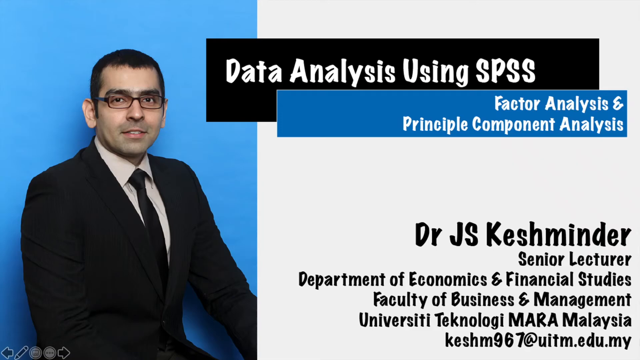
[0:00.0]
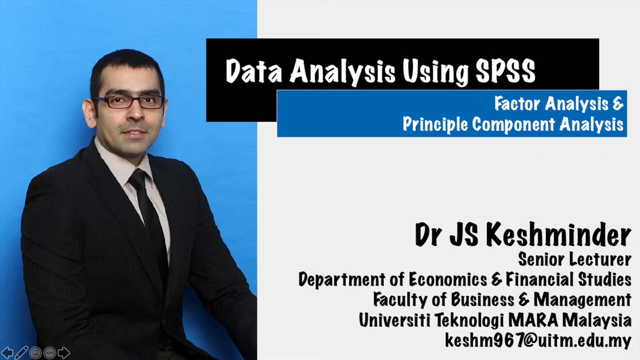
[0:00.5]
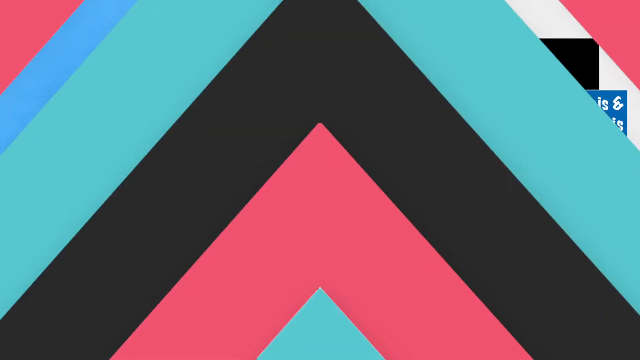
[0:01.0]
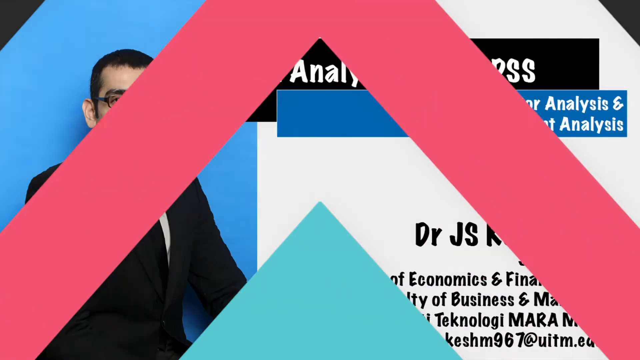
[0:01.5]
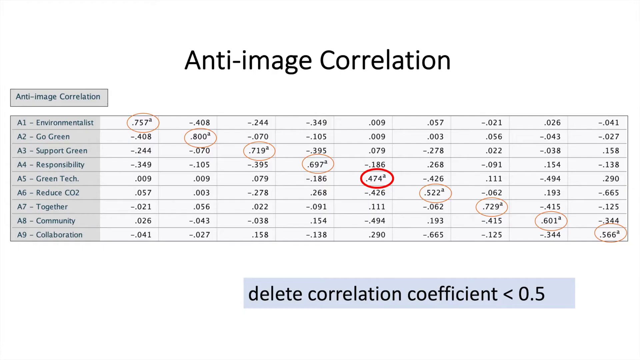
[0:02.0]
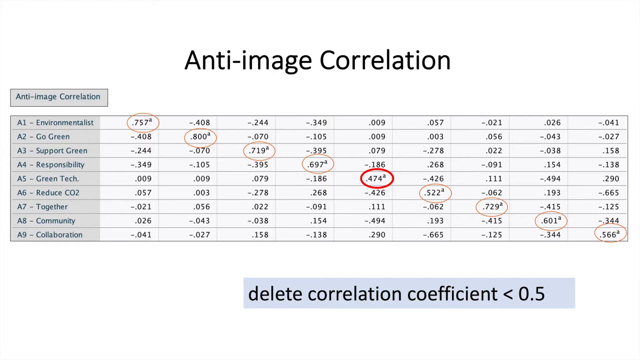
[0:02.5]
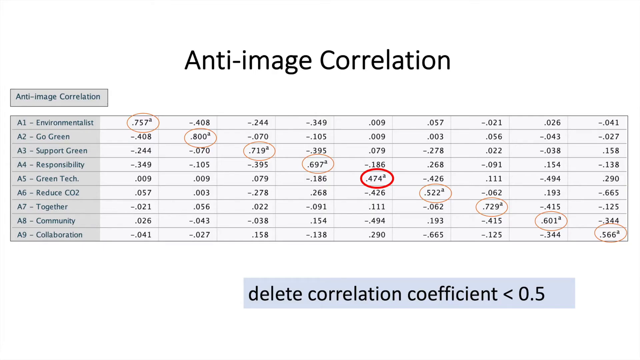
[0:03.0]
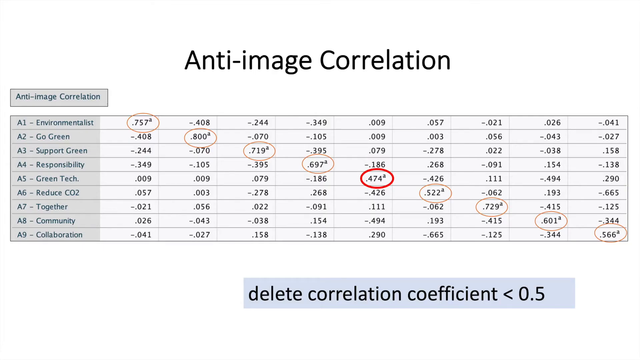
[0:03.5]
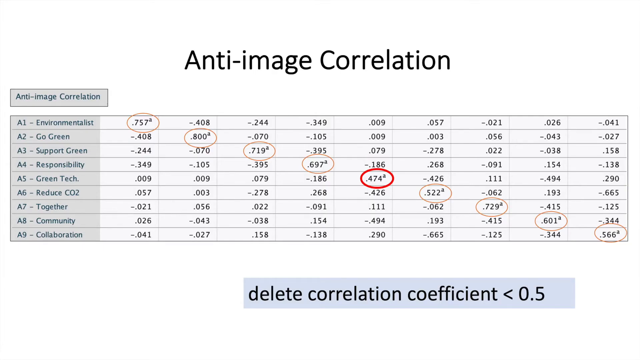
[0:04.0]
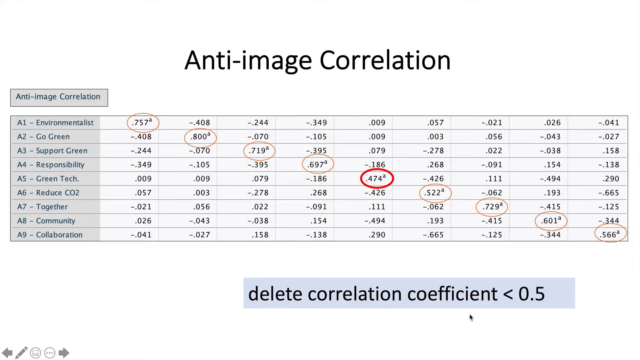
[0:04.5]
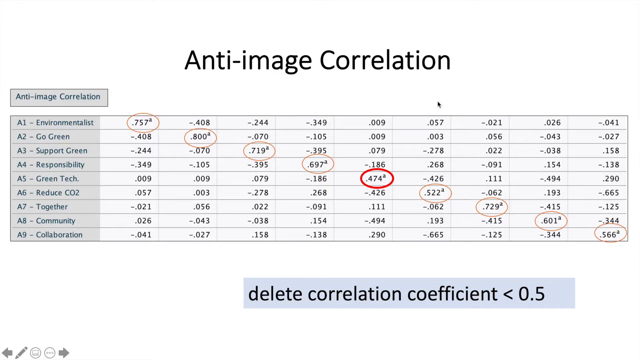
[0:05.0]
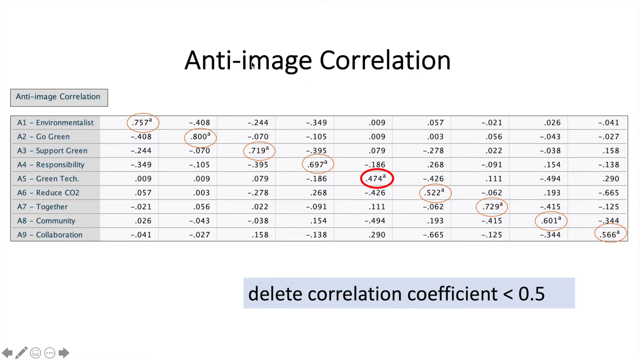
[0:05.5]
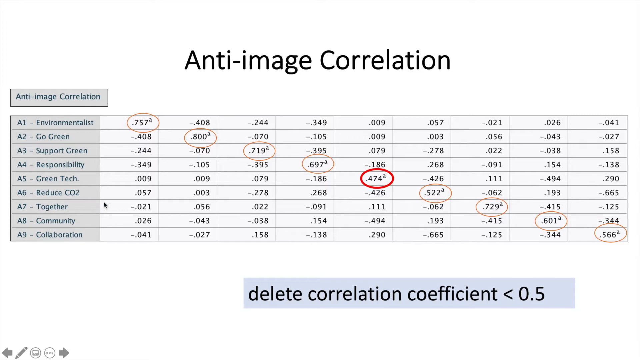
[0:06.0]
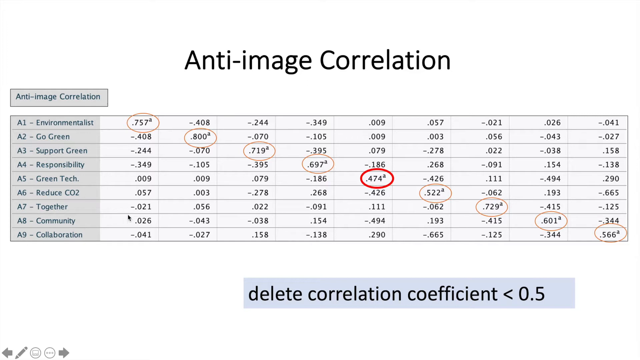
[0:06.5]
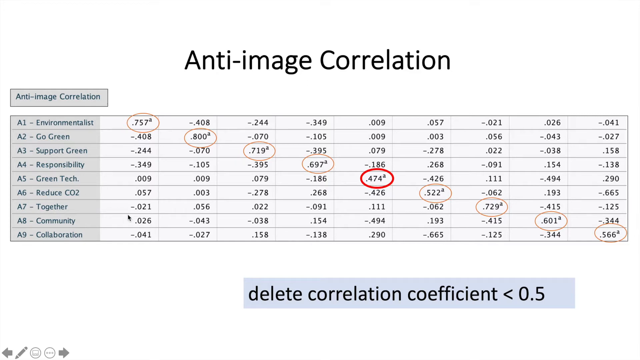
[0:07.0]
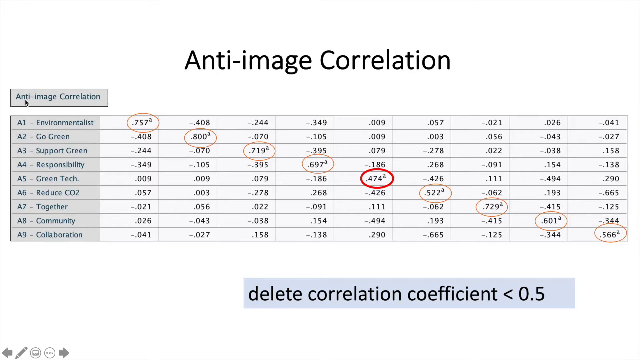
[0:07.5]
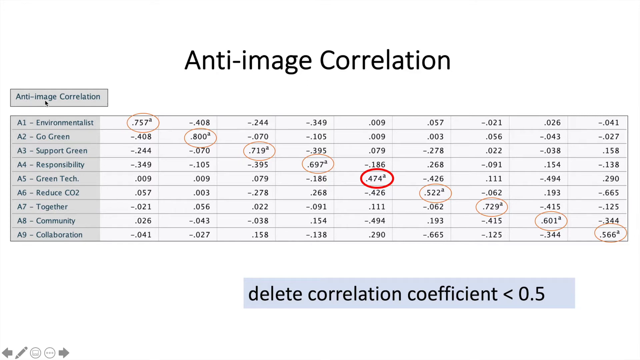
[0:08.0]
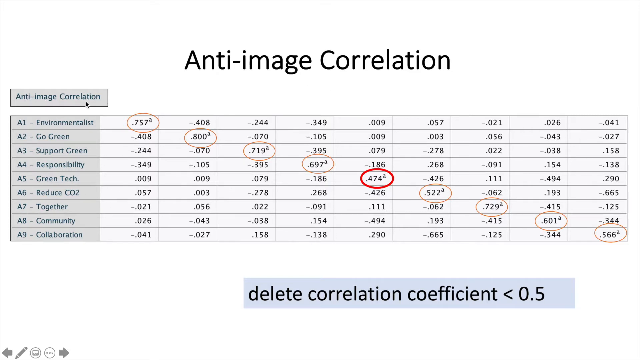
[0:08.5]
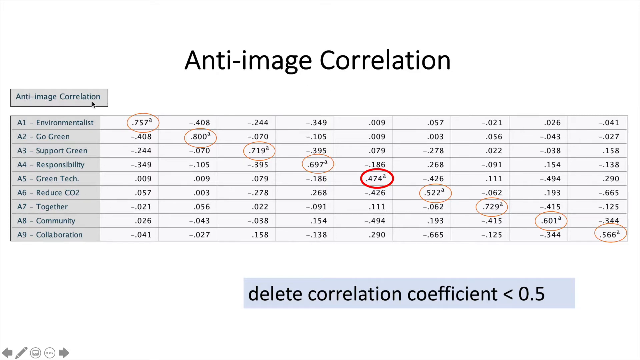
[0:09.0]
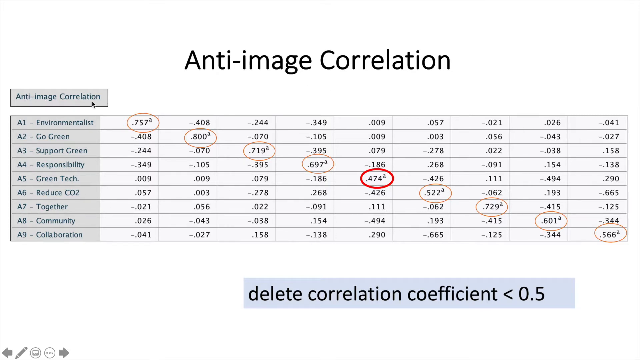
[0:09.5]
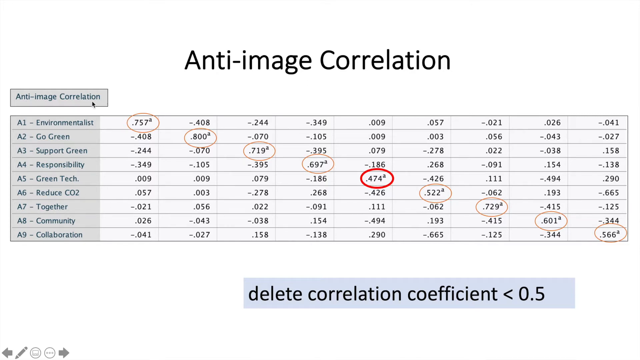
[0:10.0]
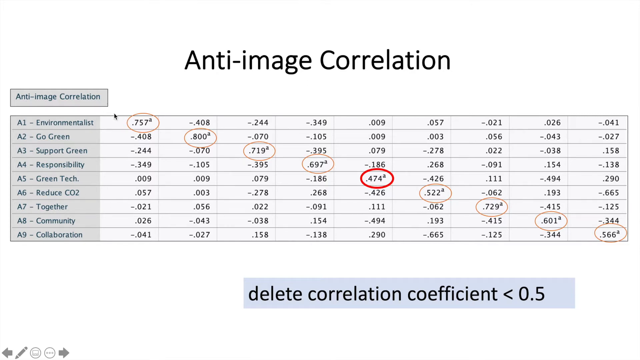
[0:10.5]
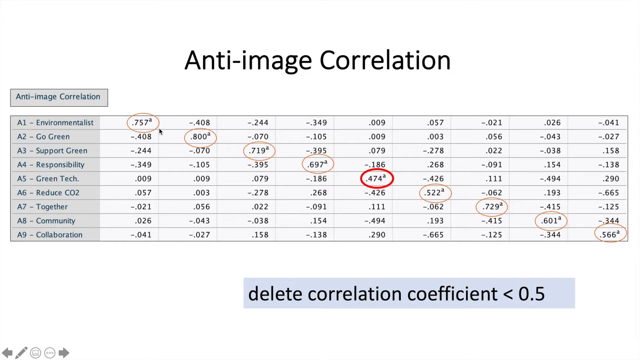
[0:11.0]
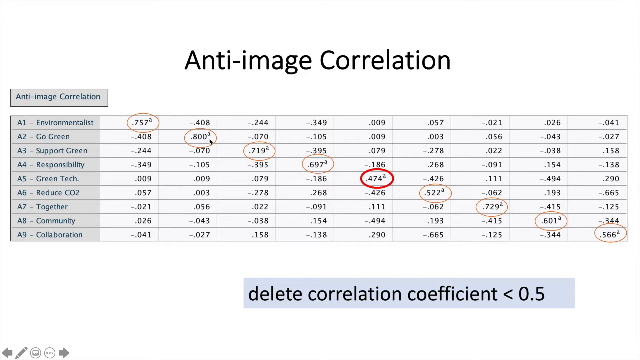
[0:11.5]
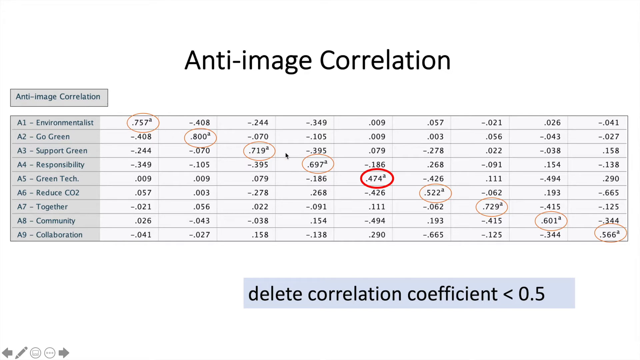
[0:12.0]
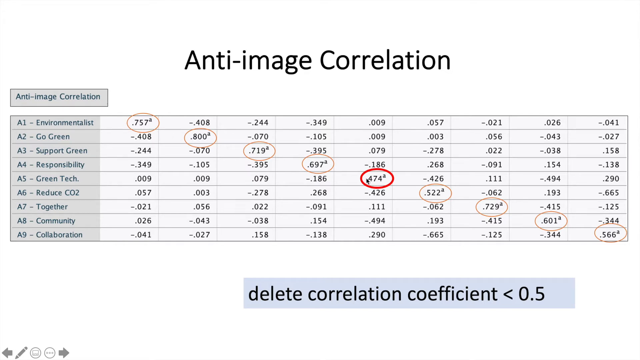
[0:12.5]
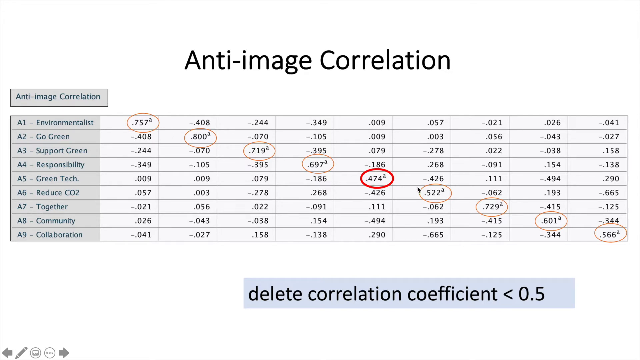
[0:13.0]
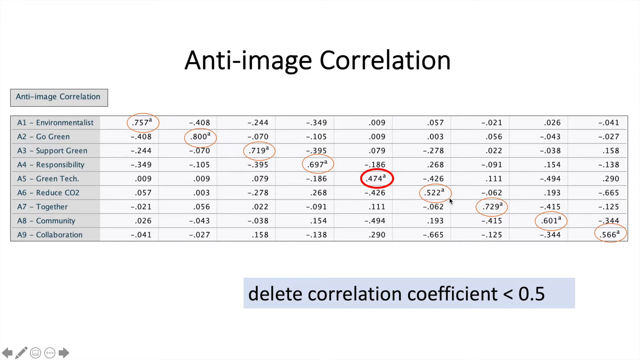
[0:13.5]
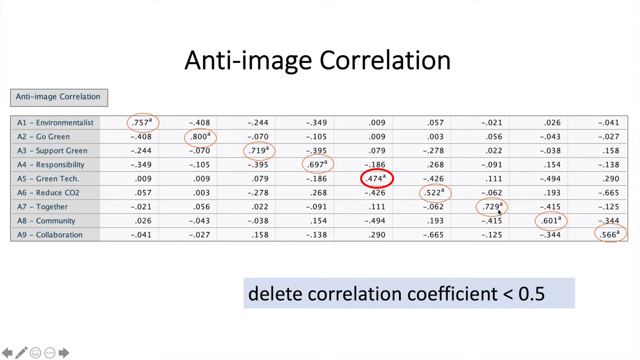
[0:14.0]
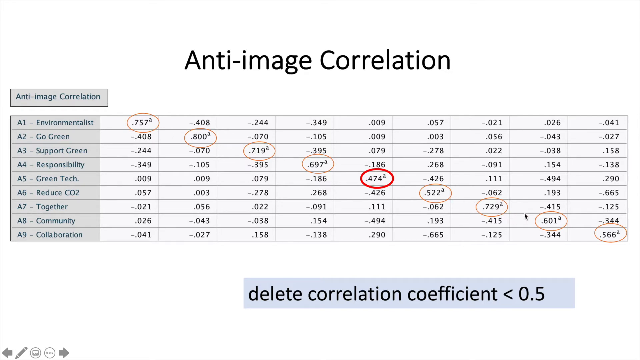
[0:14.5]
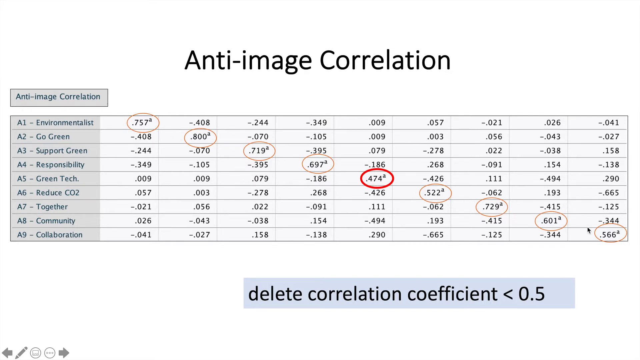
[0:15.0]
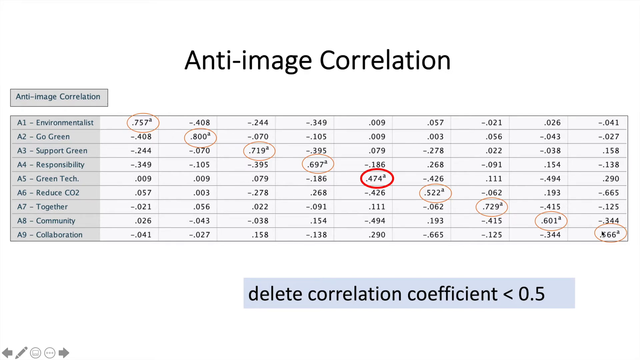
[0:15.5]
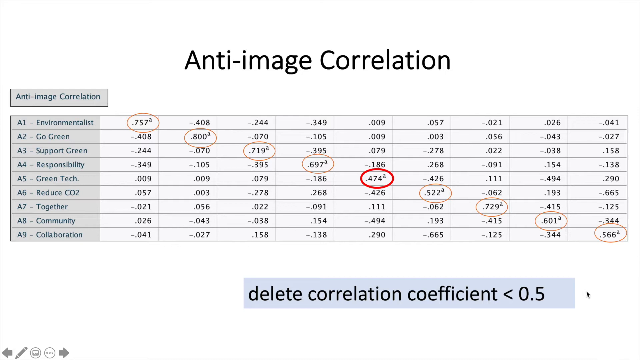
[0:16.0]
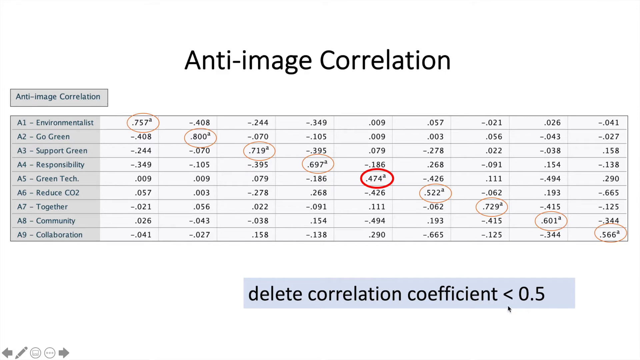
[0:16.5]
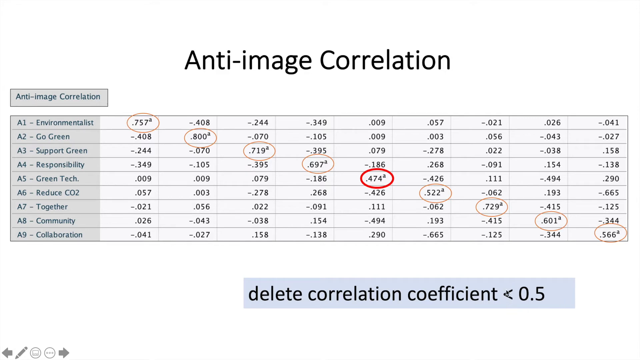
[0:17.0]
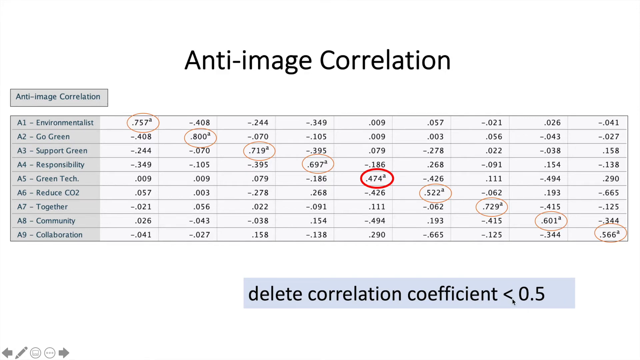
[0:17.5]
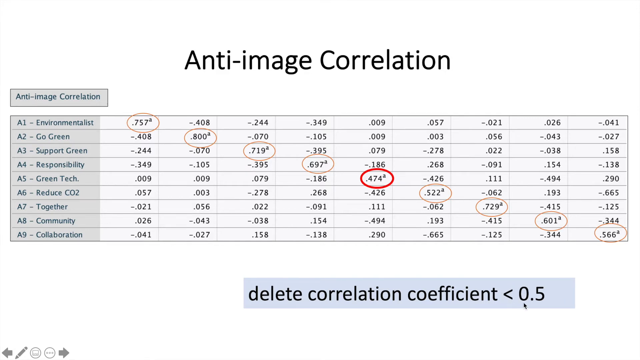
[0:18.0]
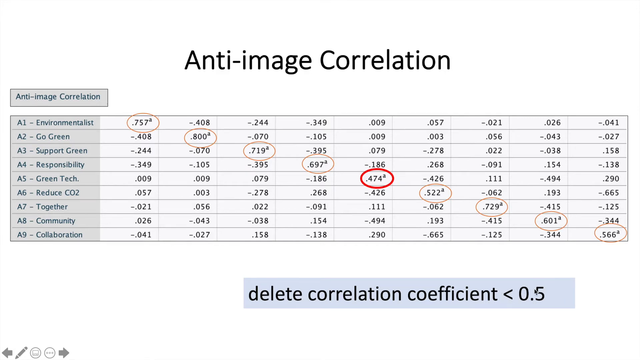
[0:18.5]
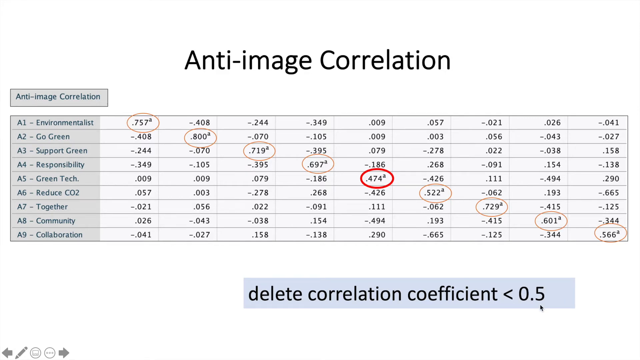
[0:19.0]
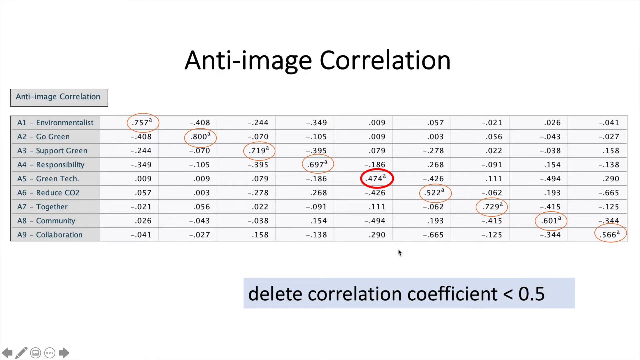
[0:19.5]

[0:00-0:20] A slideshow presentation opens on a title slide. The title "Data Analysis Using SPSS" is inside a black rectangle, and over the top of this black rectangle is a blue rectangle containing "Factor Analysis and Principal Component Analysis". Below that, the slide lists "Dr. J.S. Kenshin Minder", then "Senior Lecturer", then "Department of Economics and Financial Studies", then "Faculty of Business and Management", then "University Technology Mara Malaysia", followed by an email address. An image of the professor is on the left side. The presentation then moves to the next slide, titled "anti-image correlation", which shows a chart of the anti-image correlation filled with various numbers. Below the chart it reads "delete correlation coefficient less than 0.5". Numbers inside the chart are circled along a diagonal.